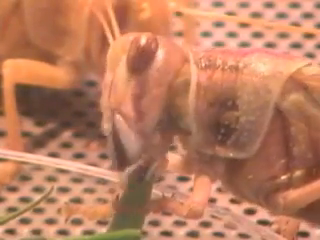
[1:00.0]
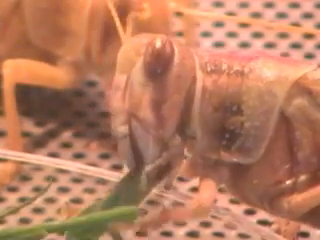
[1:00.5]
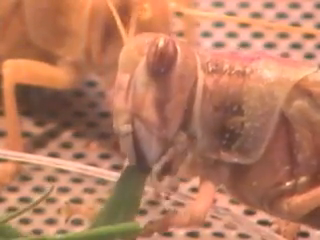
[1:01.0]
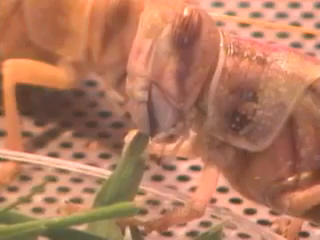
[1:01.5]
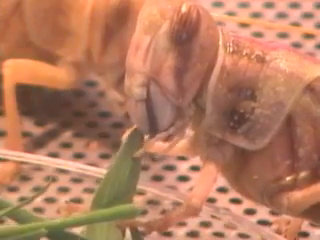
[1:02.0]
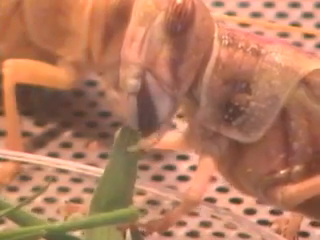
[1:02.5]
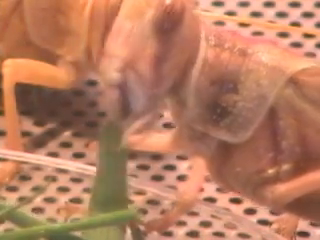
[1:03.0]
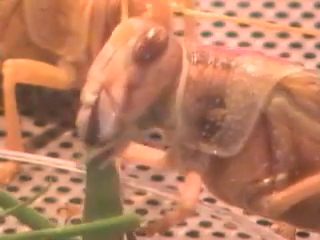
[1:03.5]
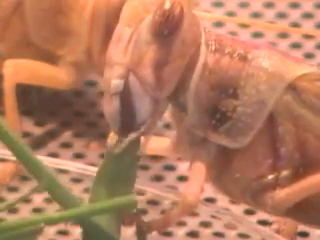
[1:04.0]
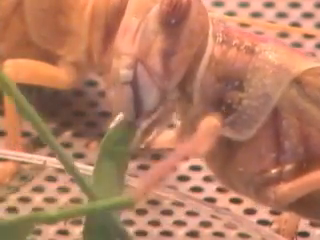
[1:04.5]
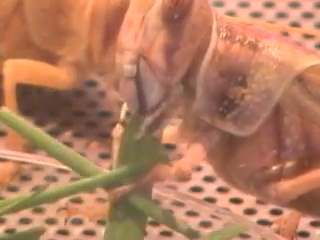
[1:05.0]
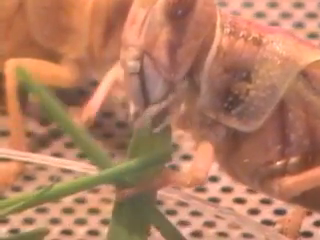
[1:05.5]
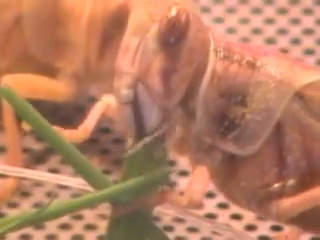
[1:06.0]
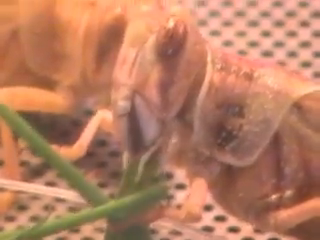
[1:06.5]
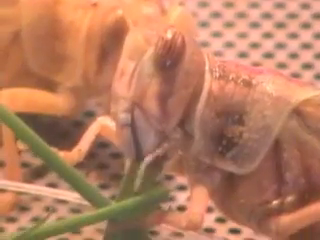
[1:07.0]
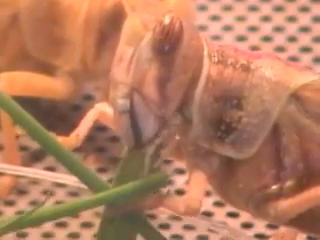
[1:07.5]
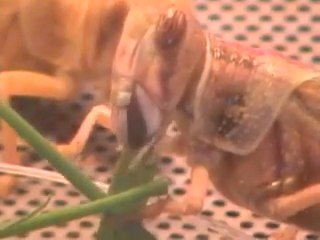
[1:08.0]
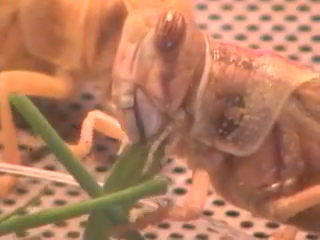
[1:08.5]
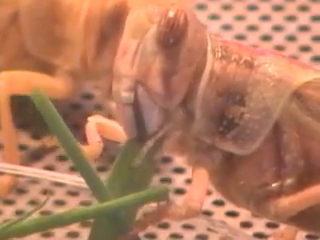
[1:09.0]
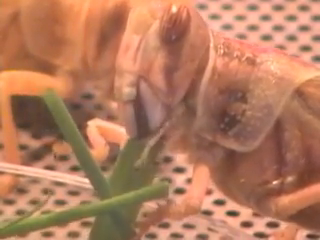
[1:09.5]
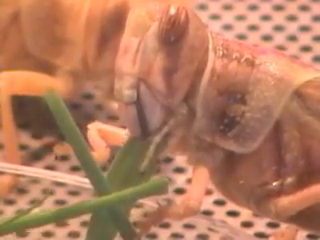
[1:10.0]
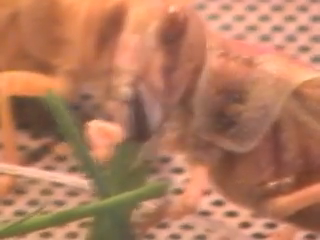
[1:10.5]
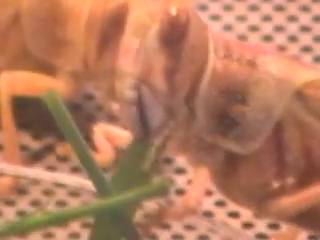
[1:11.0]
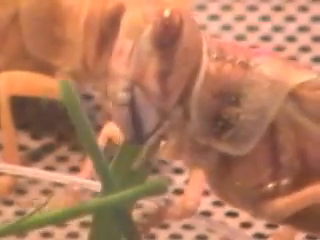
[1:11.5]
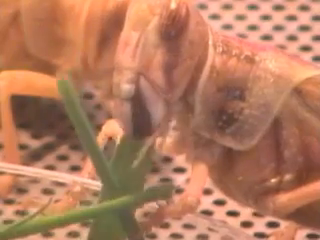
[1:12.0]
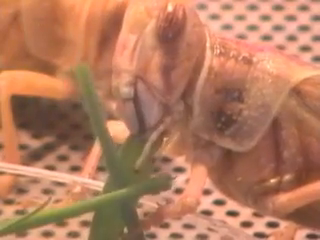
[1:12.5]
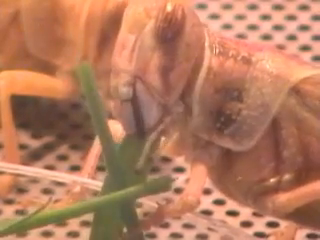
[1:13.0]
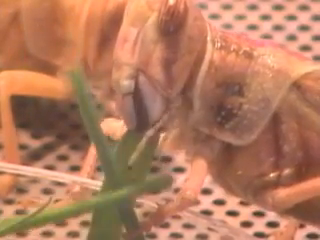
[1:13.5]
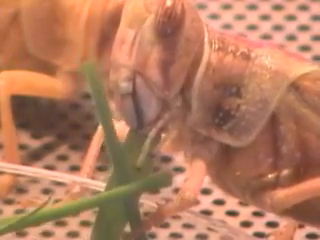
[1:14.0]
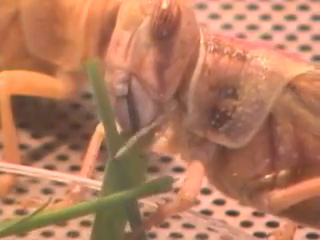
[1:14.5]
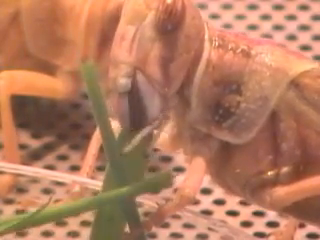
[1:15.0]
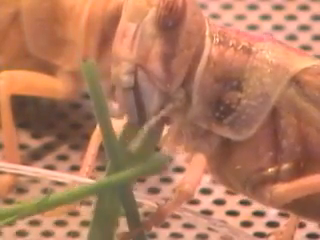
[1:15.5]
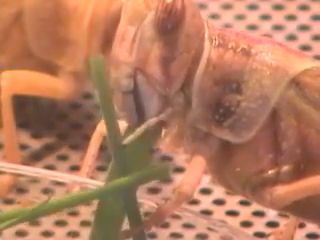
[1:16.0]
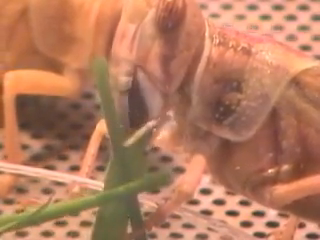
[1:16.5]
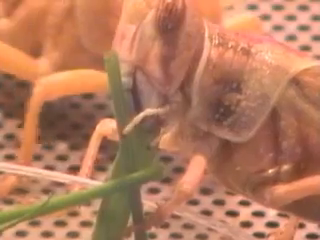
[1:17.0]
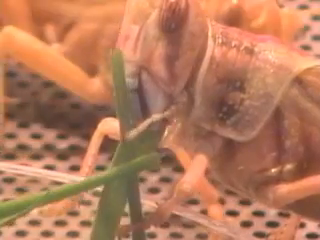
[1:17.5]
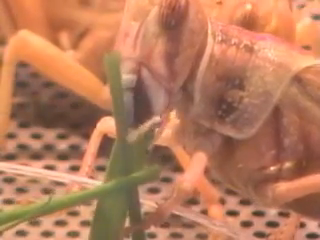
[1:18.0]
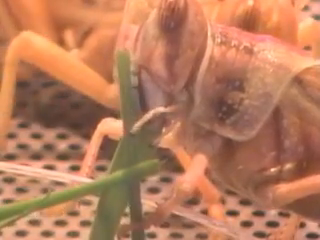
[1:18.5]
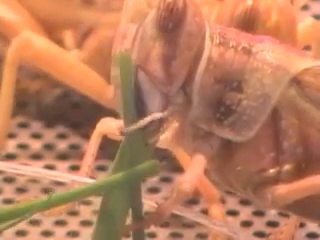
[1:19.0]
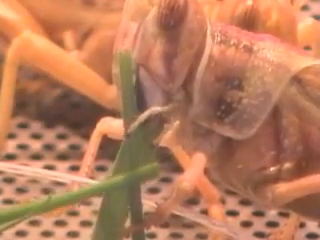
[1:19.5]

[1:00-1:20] A grasshopper is in a container that is kind of mesh and white with little holes. A cup of grass strands has been put in the middle of the cage. In the background, another grasshopper has kind of come up and approached this grasshopper, then kind of taken a little step back, maybe letting it have a chance to eat and gnaw on the blade of grass. The other grasshopper then moves slightly more toward the right, moving across the screen in that direction. The grasshopper has two antennae that seem a little short compared to those of the other grasshopper in the back, which seem a little longer. Both grasshoppers are the same color, kind of a brownish beige. This one kind of has an iridescent little flap that kind of goes over its back, and a pink strip runs down its back in that section.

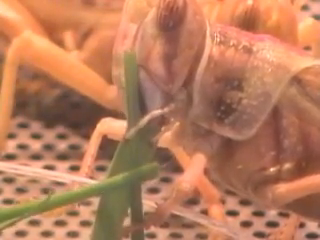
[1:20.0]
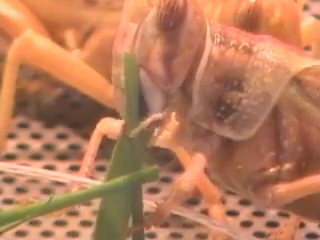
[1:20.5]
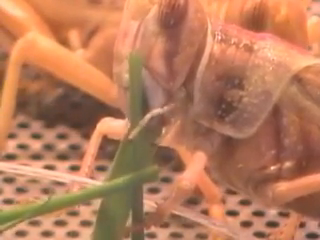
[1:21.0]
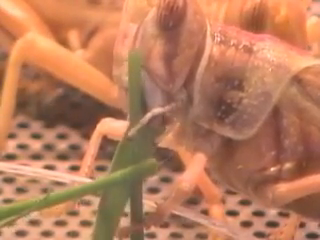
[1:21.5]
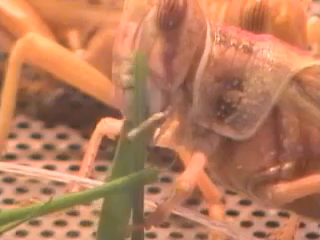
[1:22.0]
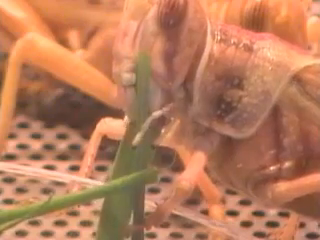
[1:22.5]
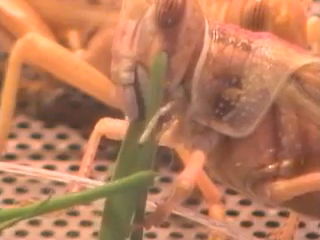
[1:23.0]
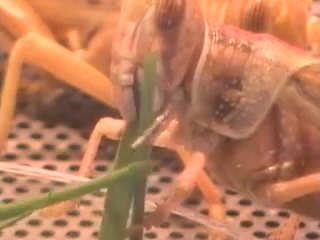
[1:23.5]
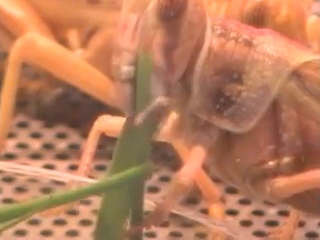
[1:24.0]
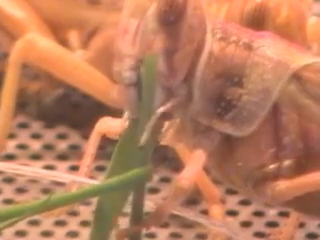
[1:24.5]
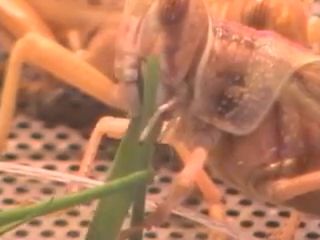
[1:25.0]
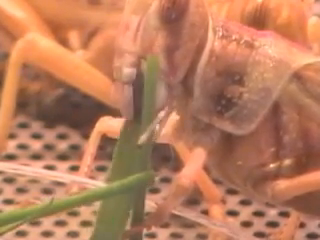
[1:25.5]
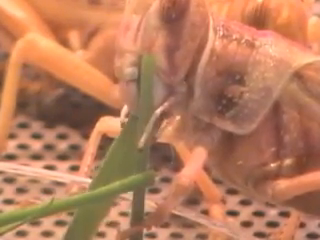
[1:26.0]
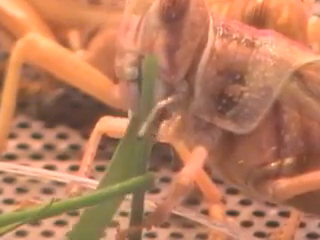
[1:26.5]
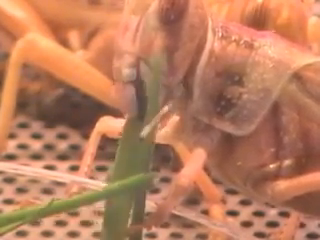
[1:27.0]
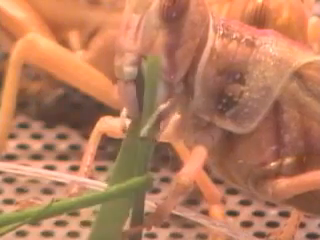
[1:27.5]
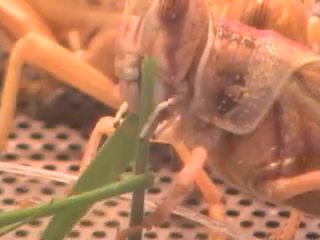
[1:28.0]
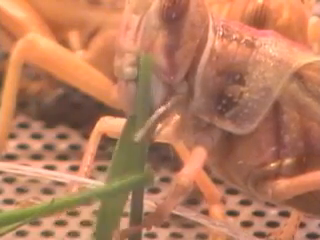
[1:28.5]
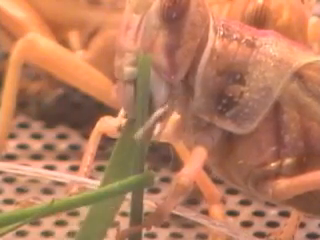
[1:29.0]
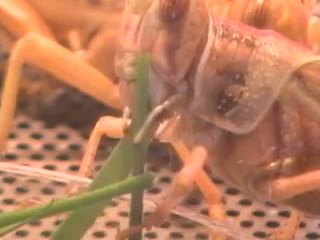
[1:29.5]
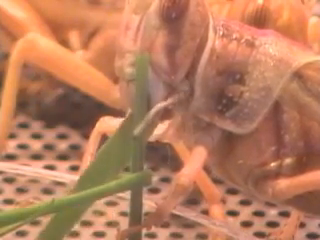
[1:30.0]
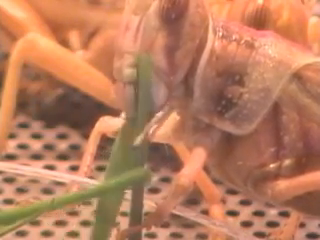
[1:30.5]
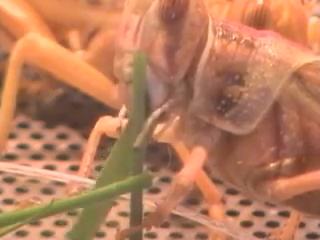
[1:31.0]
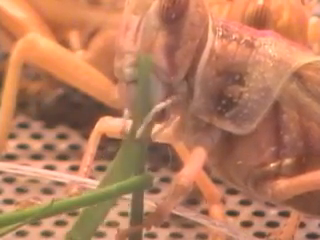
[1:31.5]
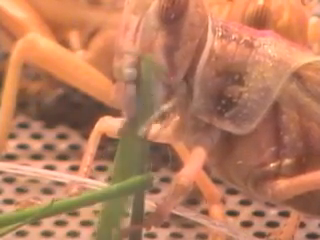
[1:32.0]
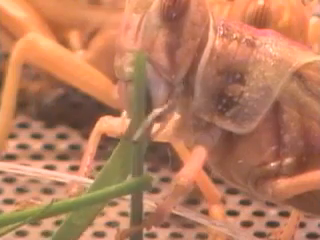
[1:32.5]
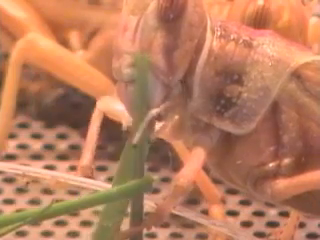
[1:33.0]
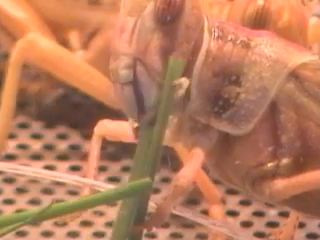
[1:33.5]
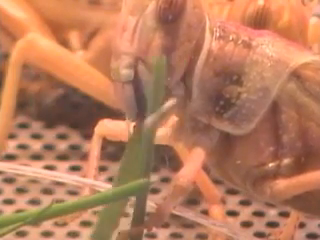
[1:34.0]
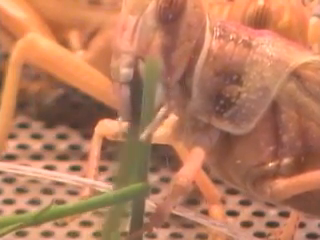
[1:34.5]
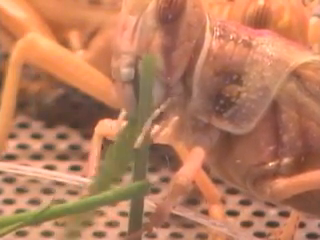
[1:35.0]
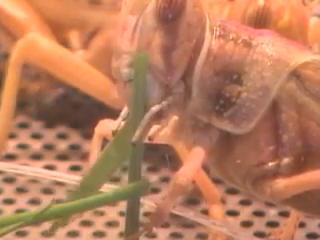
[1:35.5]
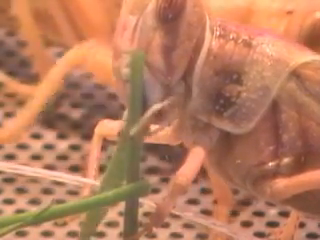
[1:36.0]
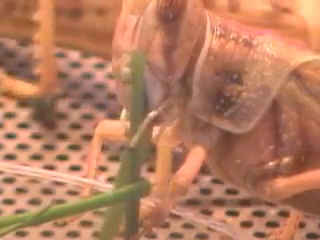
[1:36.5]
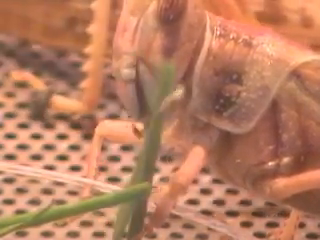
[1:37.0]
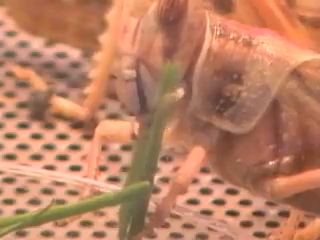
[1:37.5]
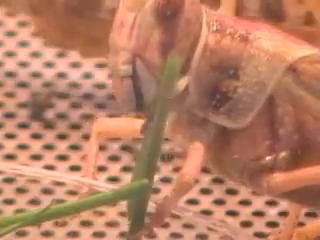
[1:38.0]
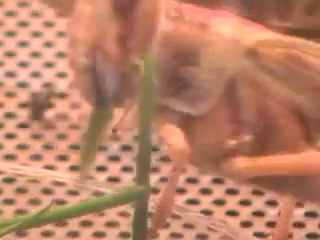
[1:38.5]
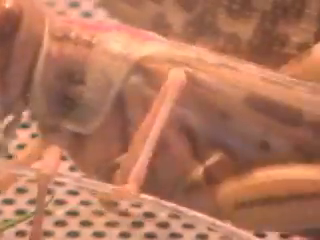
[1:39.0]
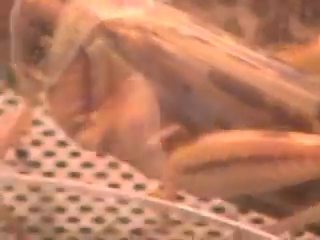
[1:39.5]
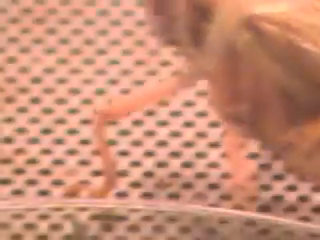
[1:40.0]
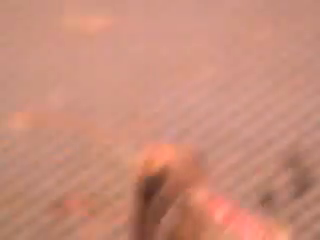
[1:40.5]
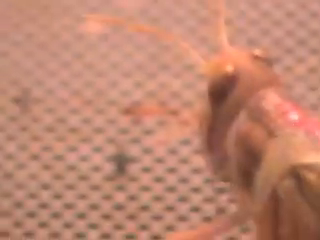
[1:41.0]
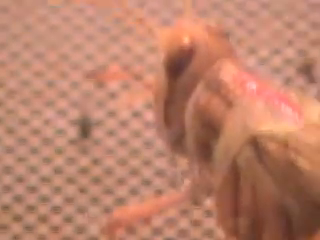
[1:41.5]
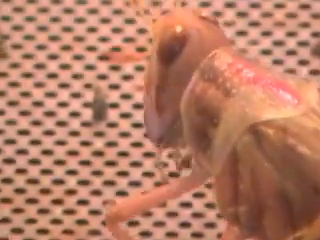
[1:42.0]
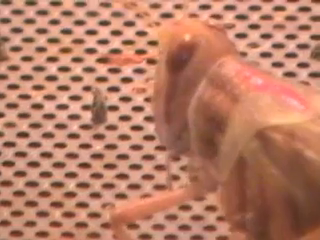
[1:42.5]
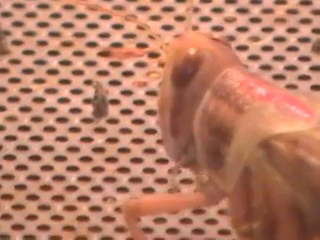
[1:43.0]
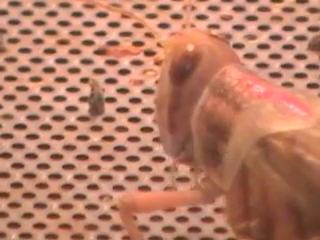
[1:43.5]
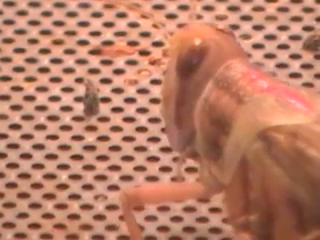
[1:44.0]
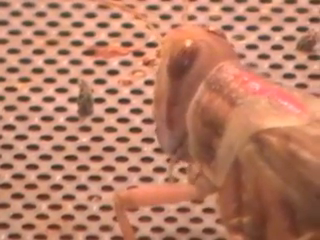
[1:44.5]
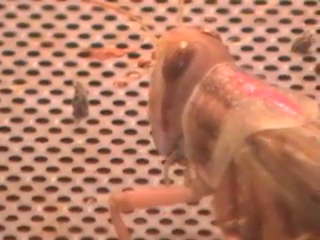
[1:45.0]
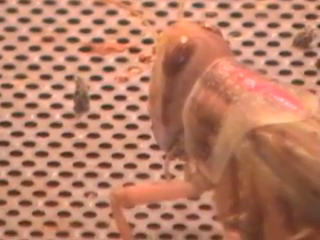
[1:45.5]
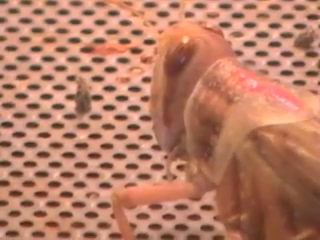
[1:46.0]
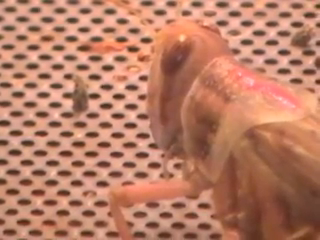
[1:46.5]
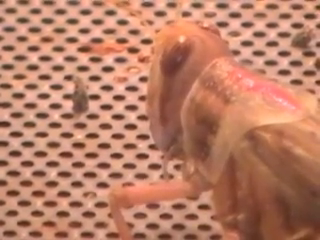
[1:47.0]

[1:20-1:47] A grasshopper in captivity, in something like a mesh container that is either plasticky or mesh, holds onto a strand of grass and is kind of eating and devouring it. In the background, another grasshopper has moved behind it and is now kind of going off screen. This grasshopper now goes to the left as the other has gone behind and to the right. Little bits of grass are kind of laying in some of the holes, maybe chunks that fell out while the grasshopper was eating. The little cup for the grass is mostly like a clear cup, and it almost looks like there might be a second clear cup in that area.